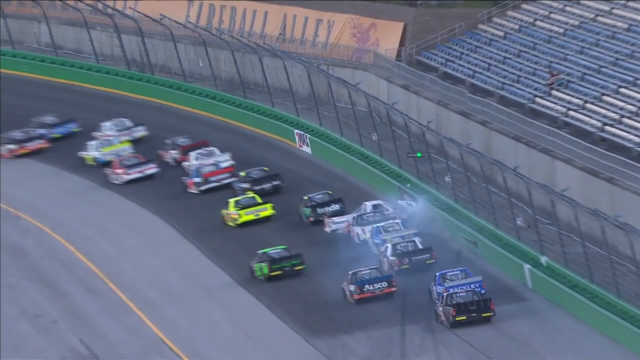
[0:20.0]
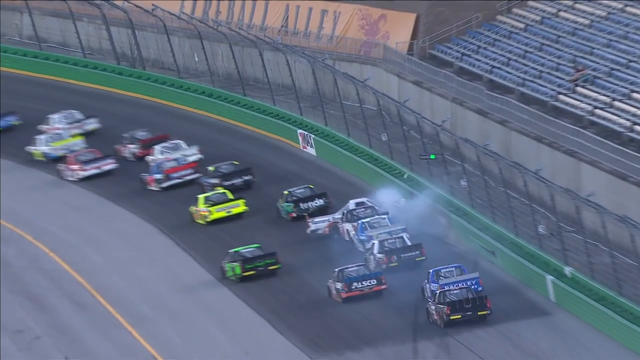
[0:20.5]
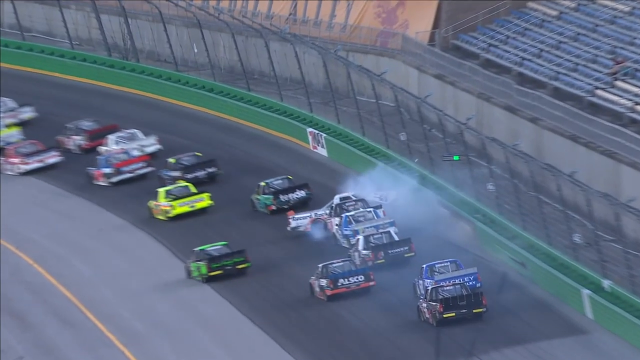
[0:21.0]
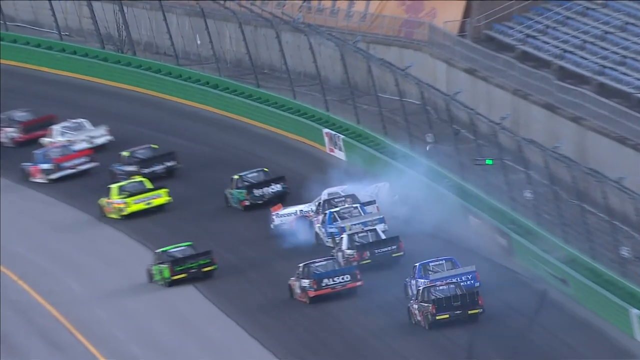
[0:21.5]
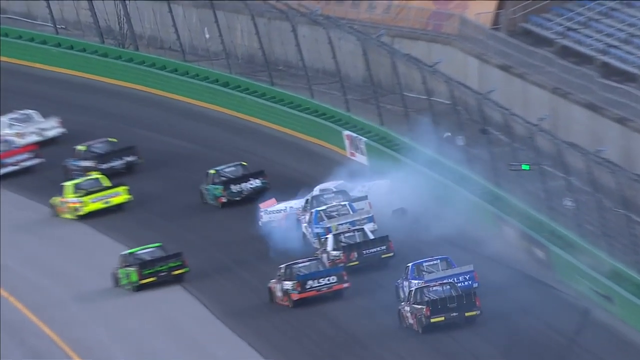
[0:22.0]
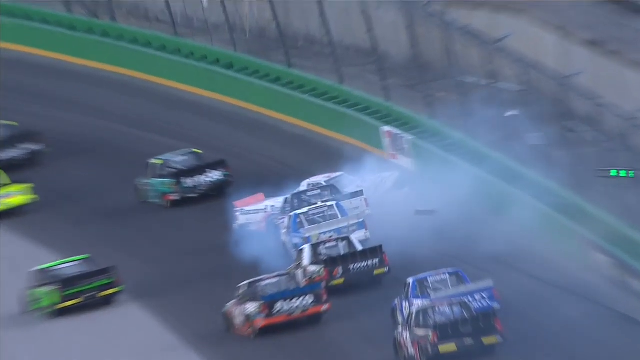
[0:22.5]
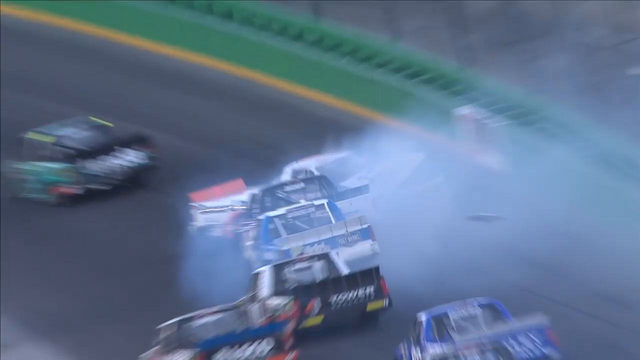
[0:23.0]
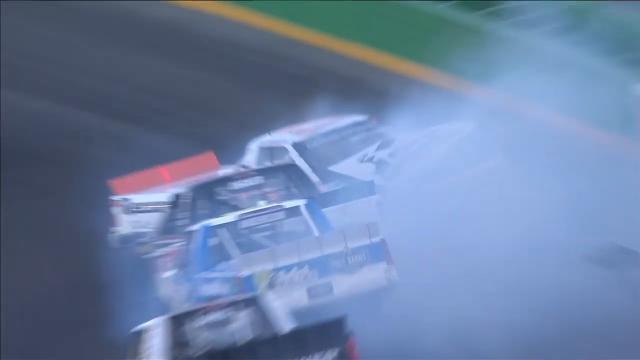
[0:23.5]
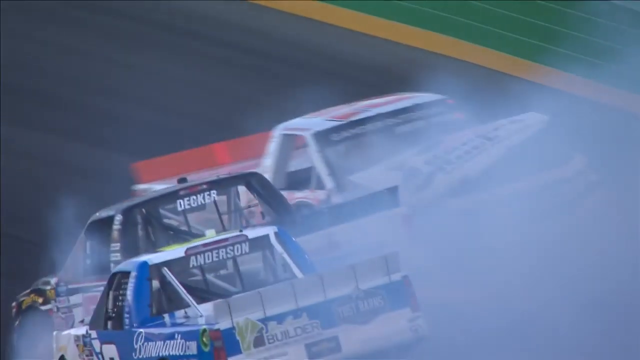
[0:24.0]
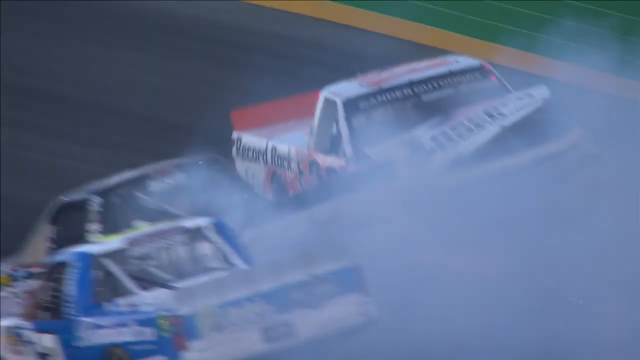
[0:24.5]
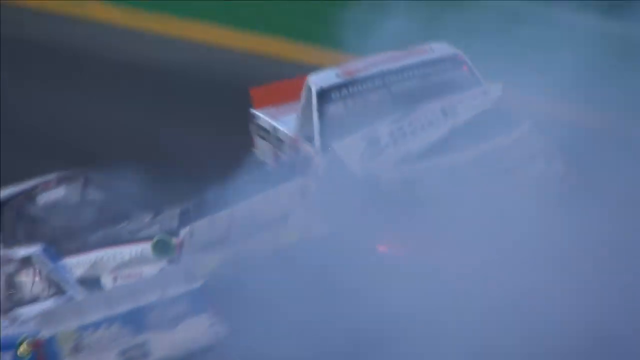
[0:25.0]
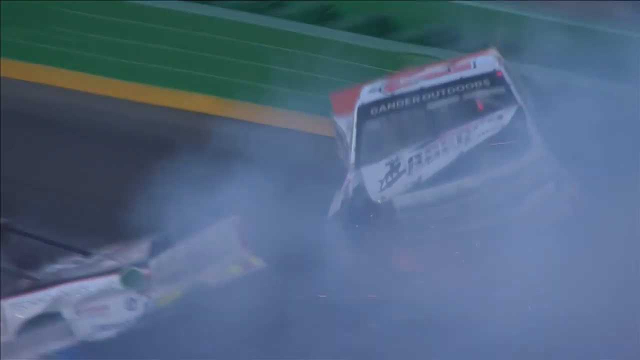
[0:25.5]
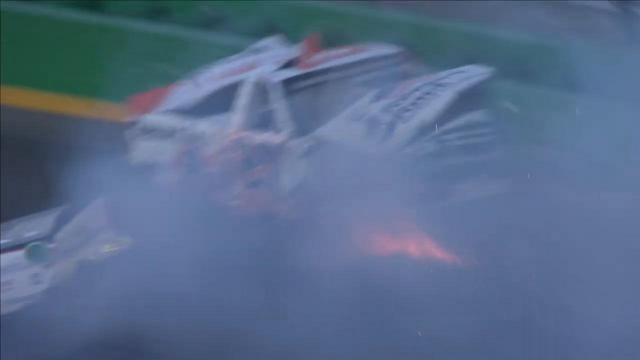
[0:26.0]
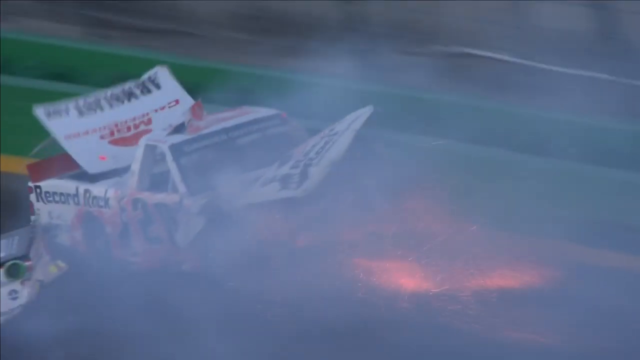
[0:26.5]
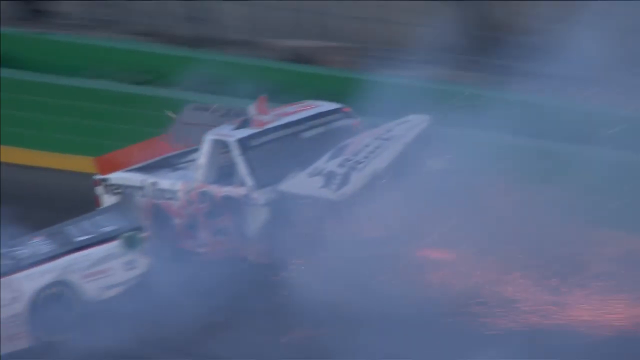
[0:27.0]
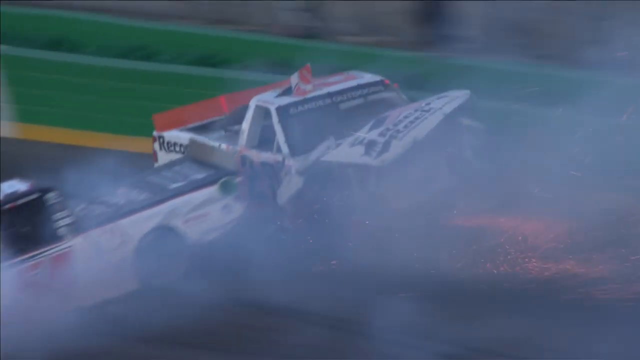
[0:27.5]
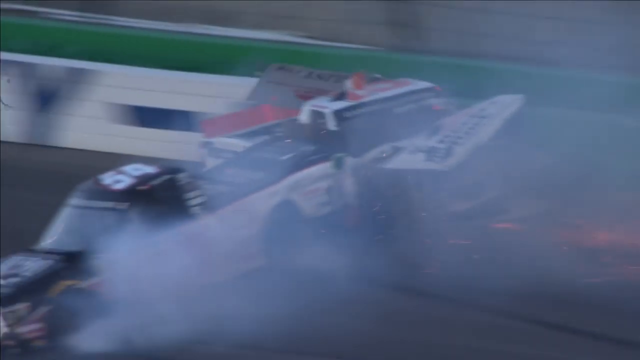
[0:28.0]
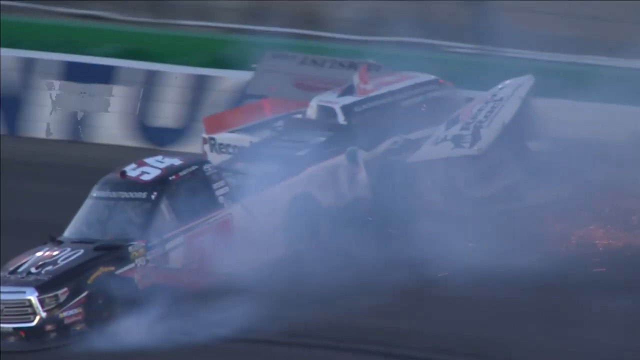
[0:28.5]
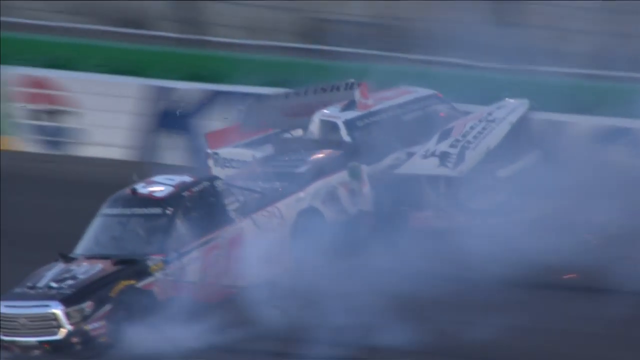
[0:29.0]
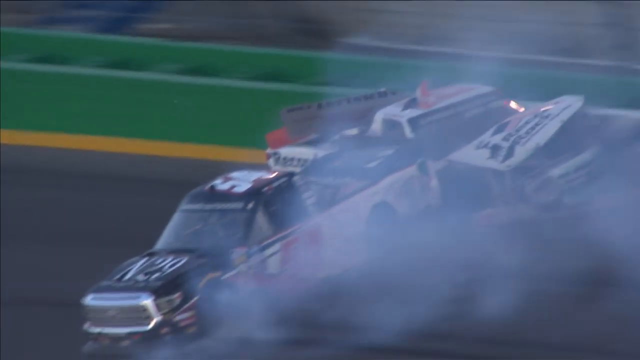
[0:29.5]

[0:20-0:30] The slow-motion replay continues, showing how one car slammed into the side of the road, which caused a second car to run into it. Smoke begins to come out of one car as it turns around and ends up facing the wrong way, and fire comes out of its front end. Stands are visible on the right-hand side, but they appear empty, except maybe one person who can be vaguely seen sitting there. It might be a sunny day, maybe sundown or sunup. In the background there is a "fireball alley" sign that is either possibly reflecting the sun slightly or simply a light orange color.